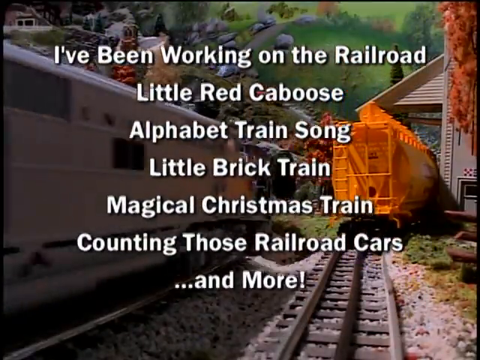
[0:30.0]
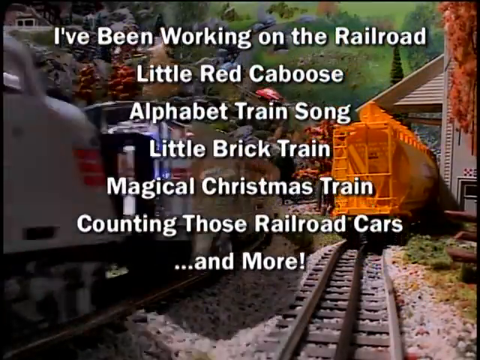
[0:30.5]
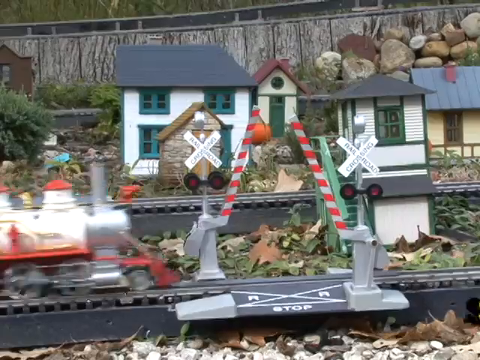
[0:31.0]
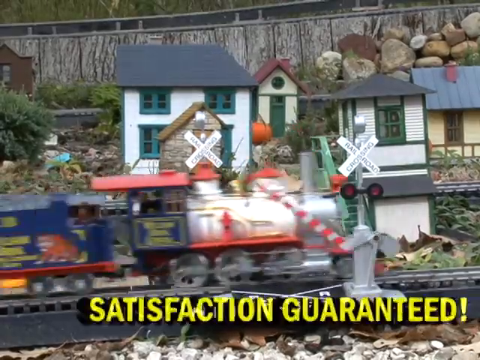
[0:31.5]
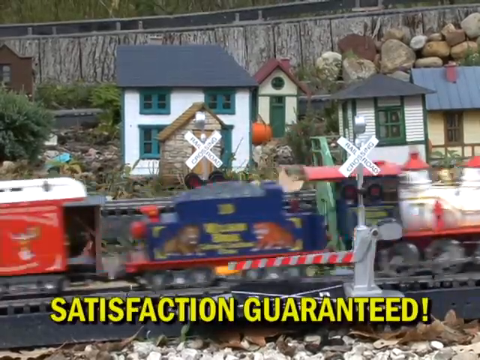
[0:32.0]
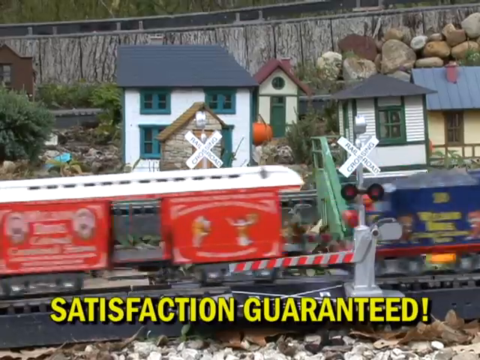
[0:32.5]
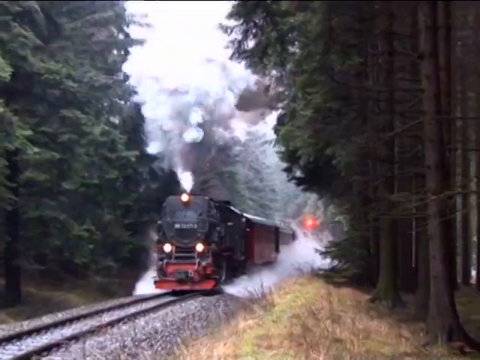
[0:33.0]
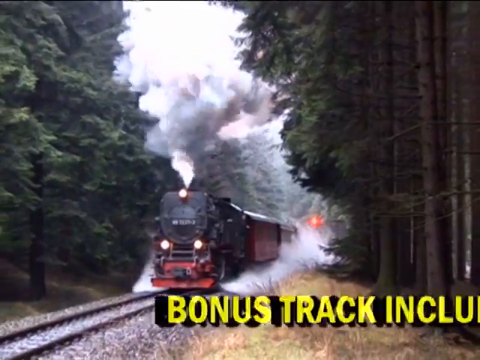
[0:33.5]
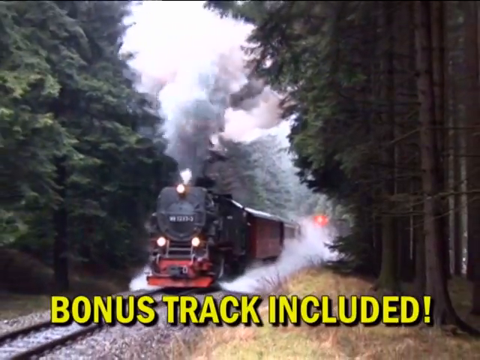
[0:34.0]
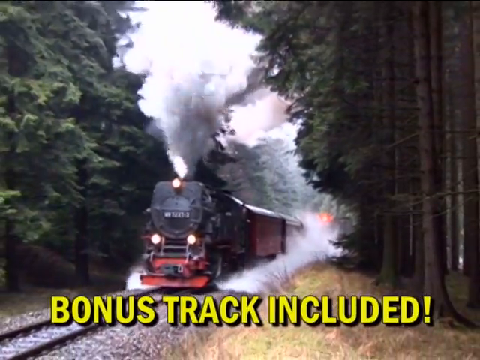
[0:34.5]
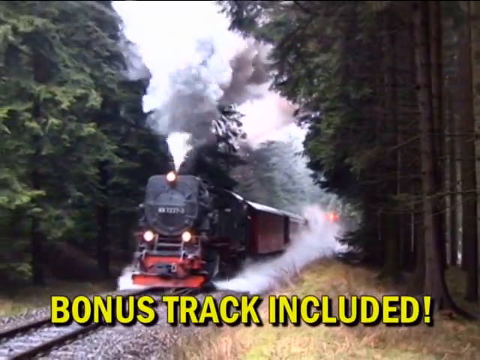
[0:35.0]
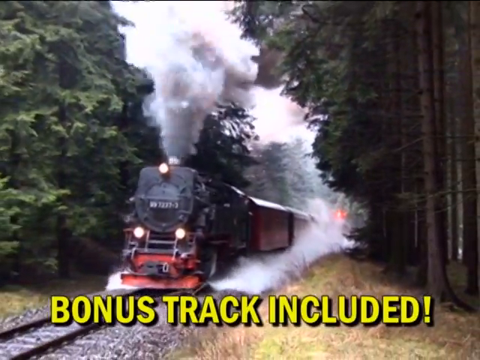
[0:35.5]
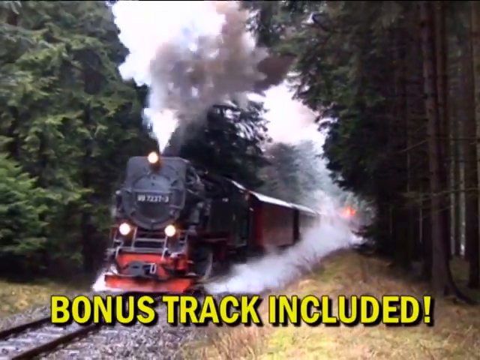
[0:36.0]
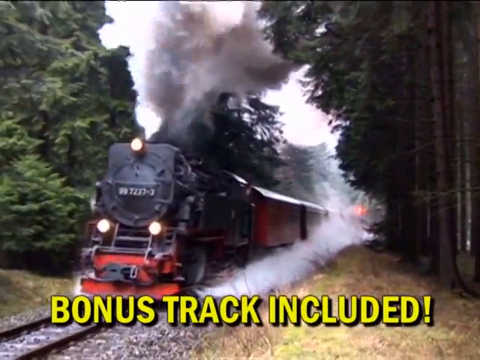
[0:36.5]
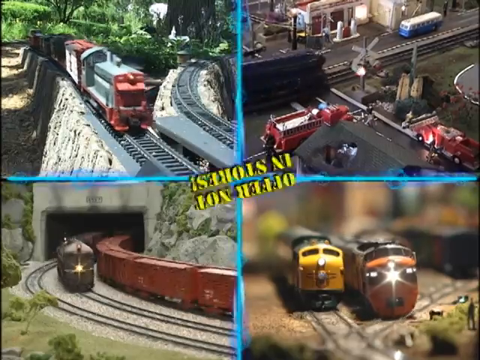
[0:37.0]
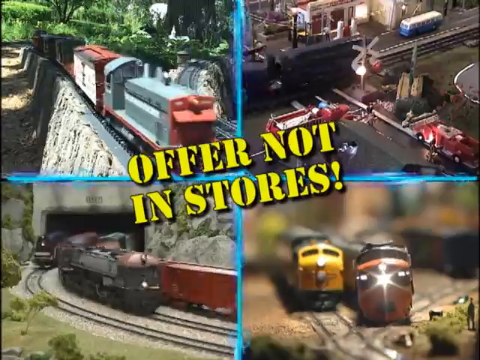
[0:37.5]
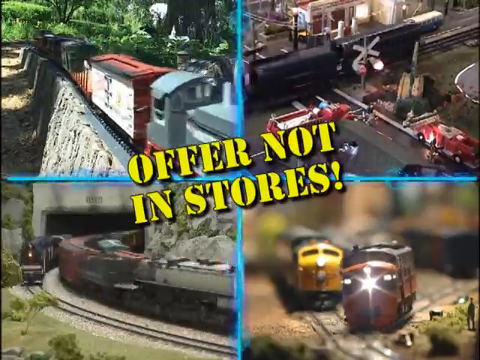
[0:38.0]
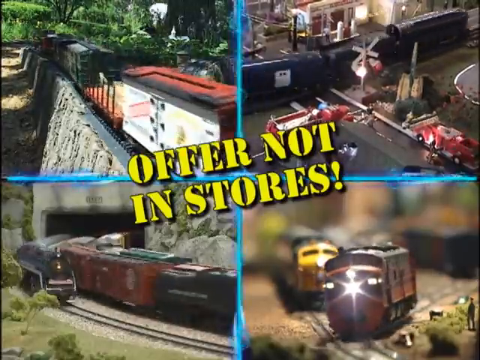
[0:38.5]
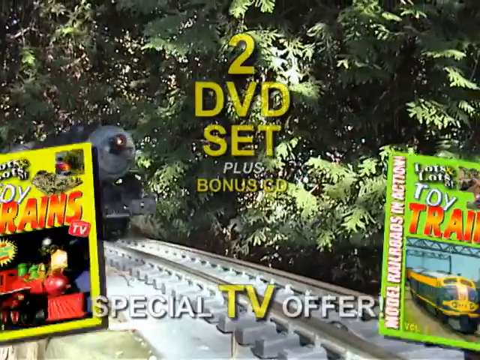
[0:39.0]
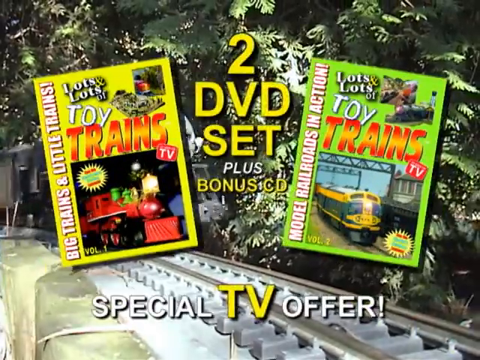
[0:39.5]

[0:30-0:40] In the background, a grey toy train is on the left of the screen and an orange one sits still on the right. Over this, a list of train-themed songs in white text reads "i've been working on the railroad the red caboose alphabet train song little brick train magical christmas train counting boats railroad cars and more," scrolling toward the top of the screen. The video switches to different footage of a toy train, with yellow text at the bottom reading "satisfaction guaranteed," and a picture of an actual train blowing steam, with pine trees on either side of the track. Yellow text at the bottom says "bonus track included" as a train appears close to the camera. The screen is then divided into four, each quarter showing a different train. Text about the toy trains not being in stores appears in the middle of the screen. Once again a two-DVD set is shown, with a yellow one on the left and a green one on the right.